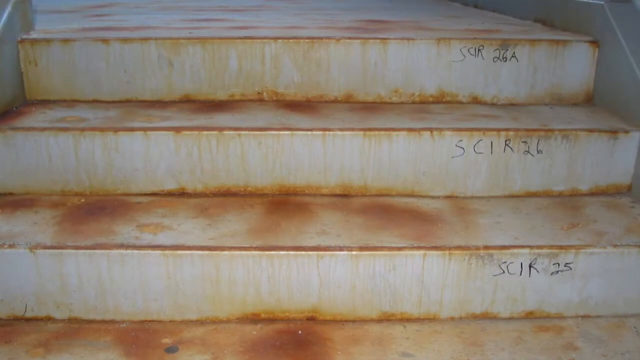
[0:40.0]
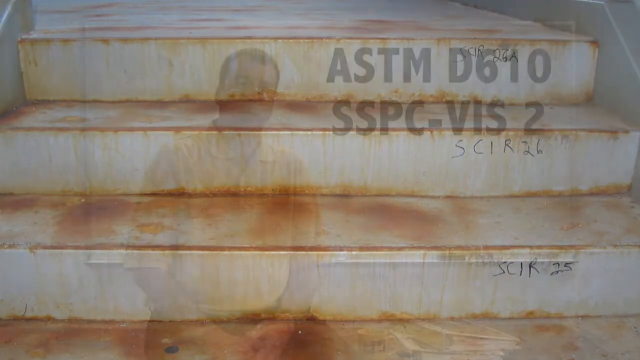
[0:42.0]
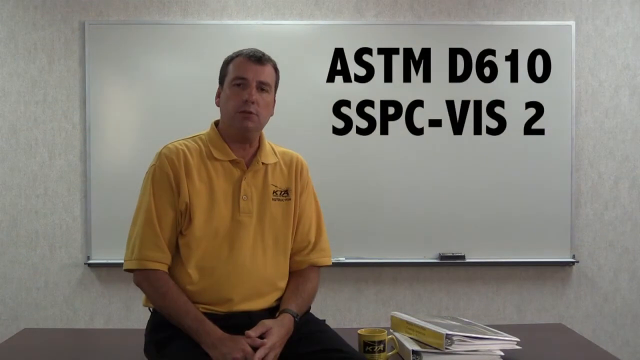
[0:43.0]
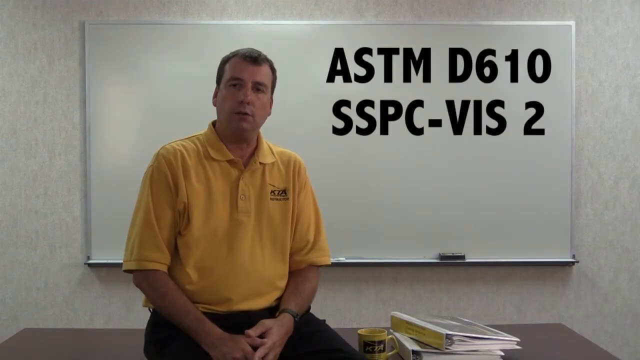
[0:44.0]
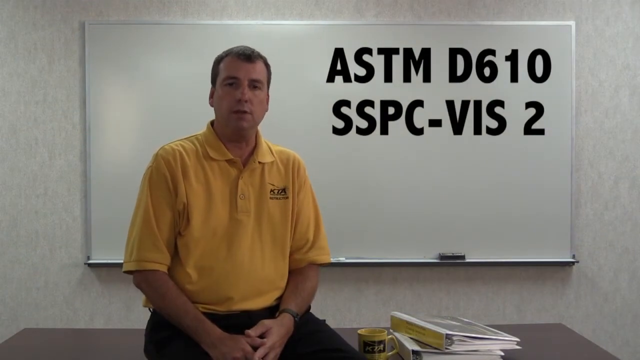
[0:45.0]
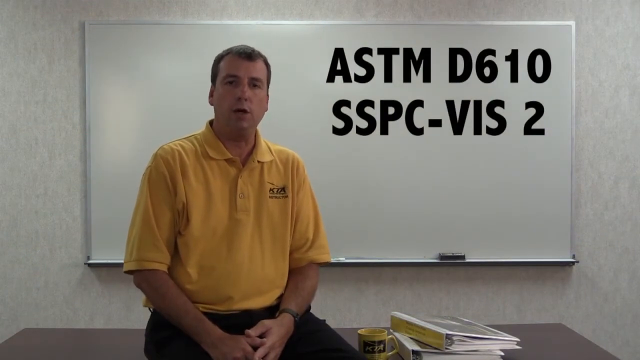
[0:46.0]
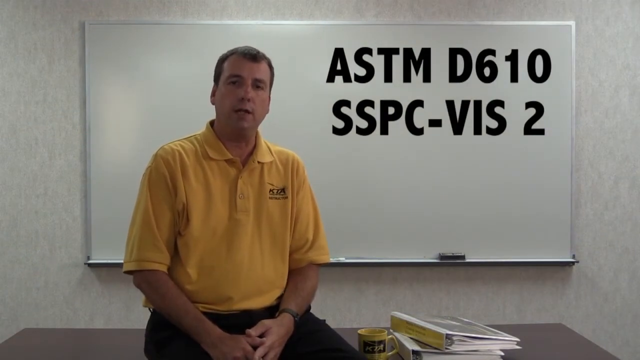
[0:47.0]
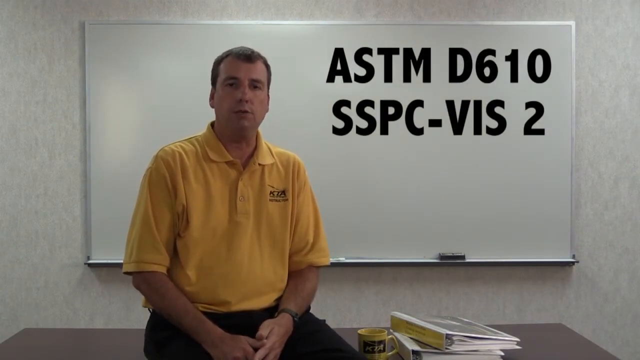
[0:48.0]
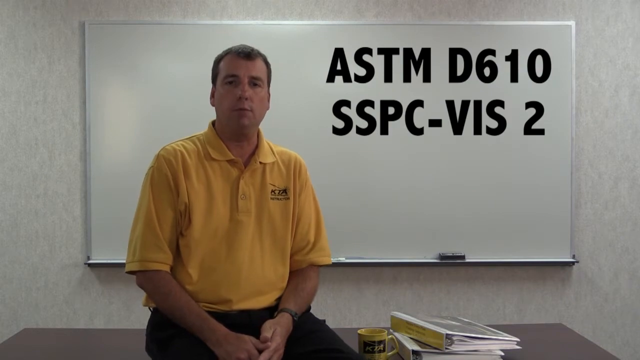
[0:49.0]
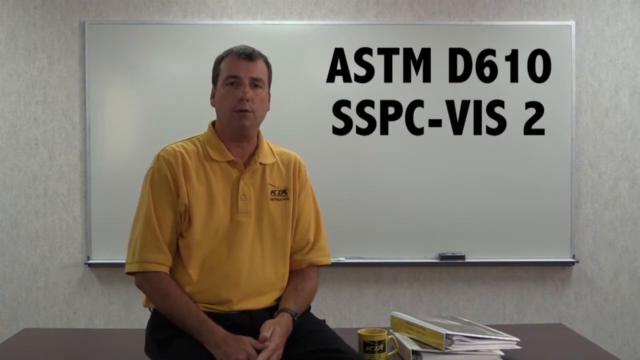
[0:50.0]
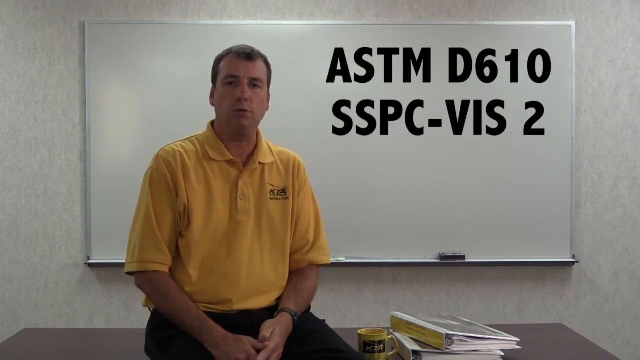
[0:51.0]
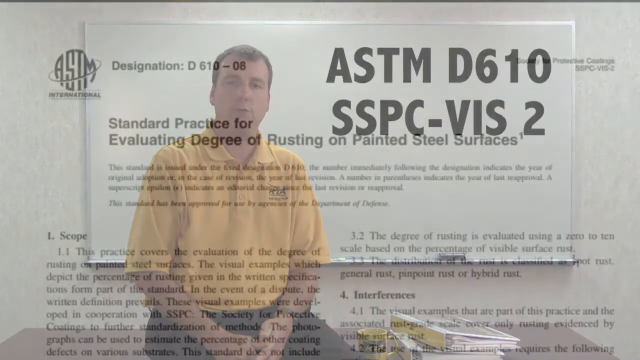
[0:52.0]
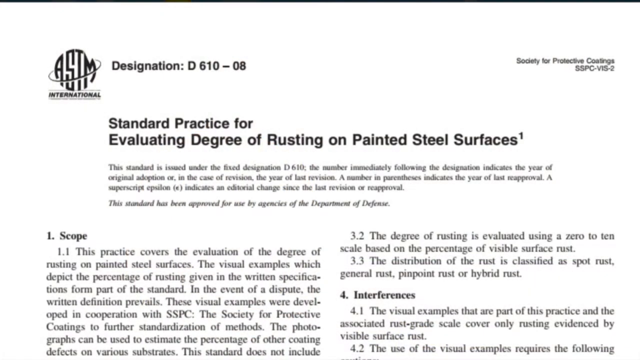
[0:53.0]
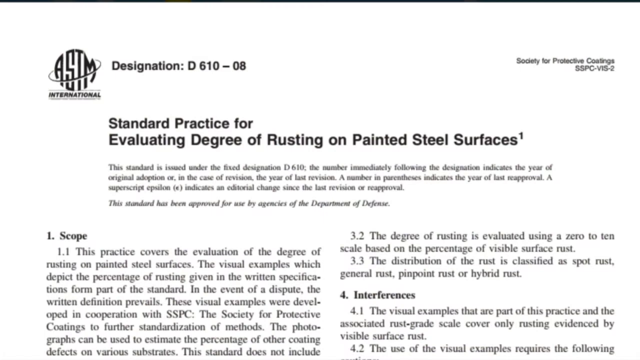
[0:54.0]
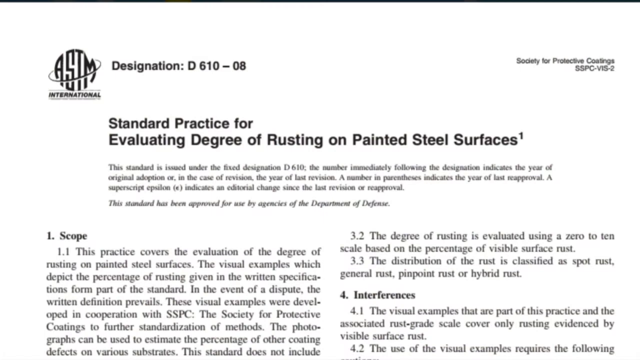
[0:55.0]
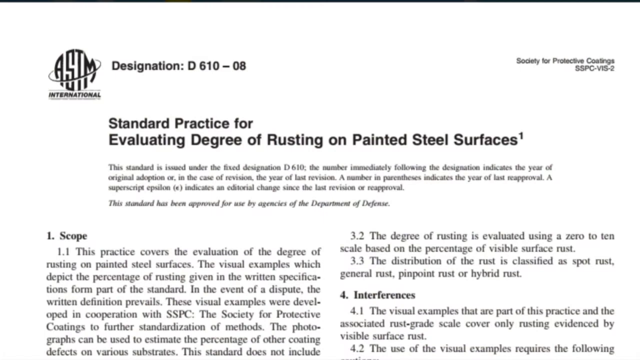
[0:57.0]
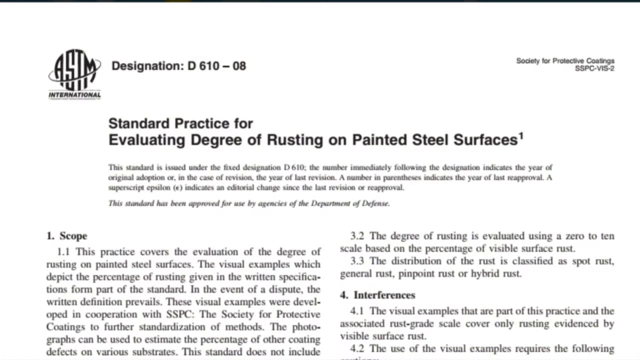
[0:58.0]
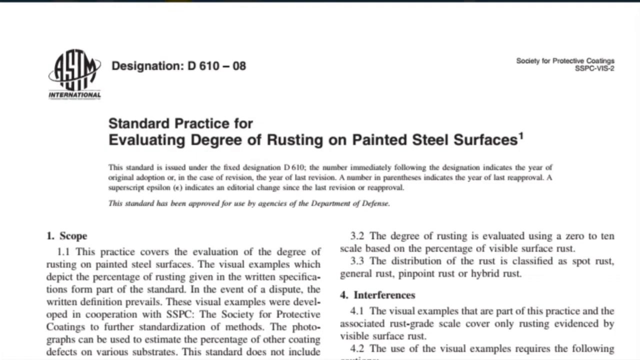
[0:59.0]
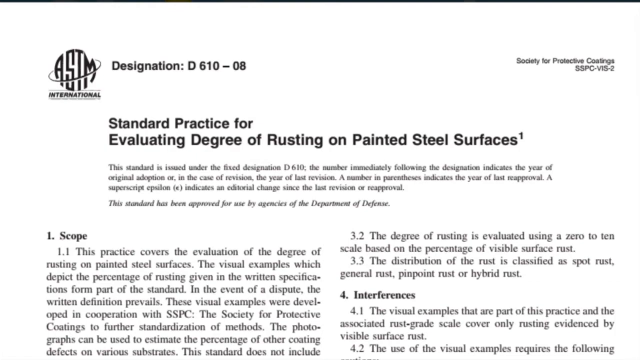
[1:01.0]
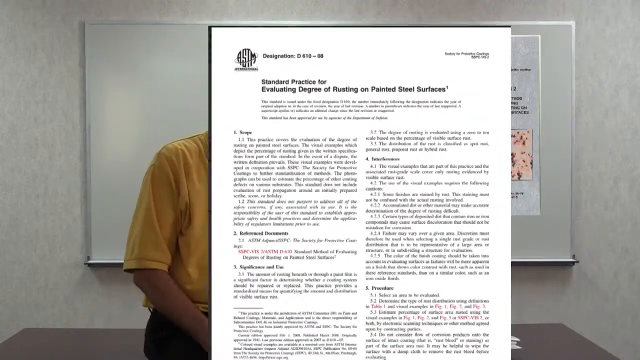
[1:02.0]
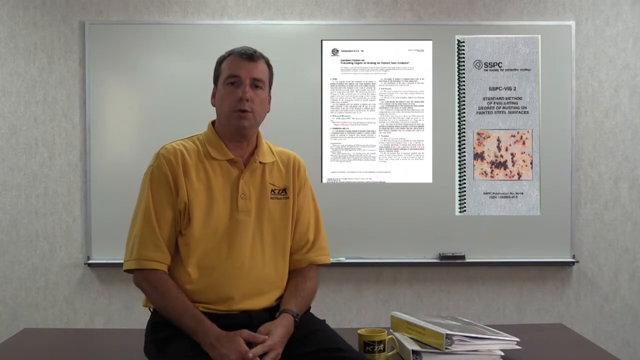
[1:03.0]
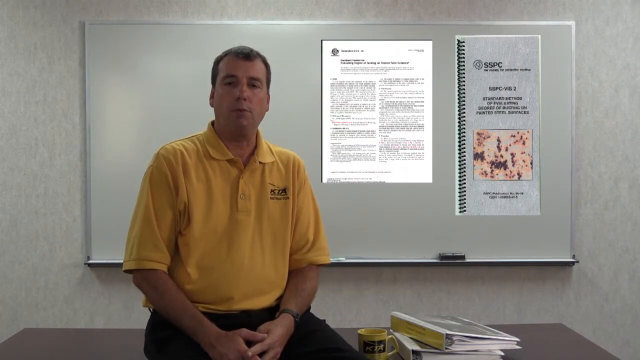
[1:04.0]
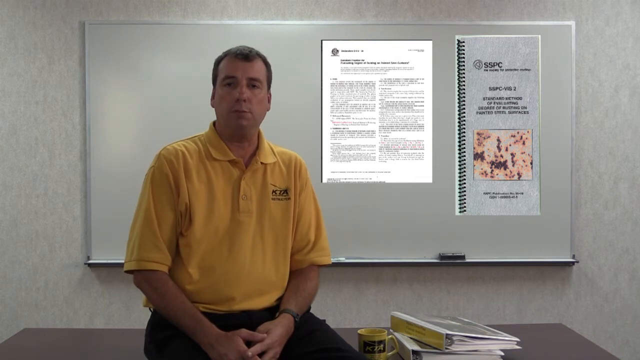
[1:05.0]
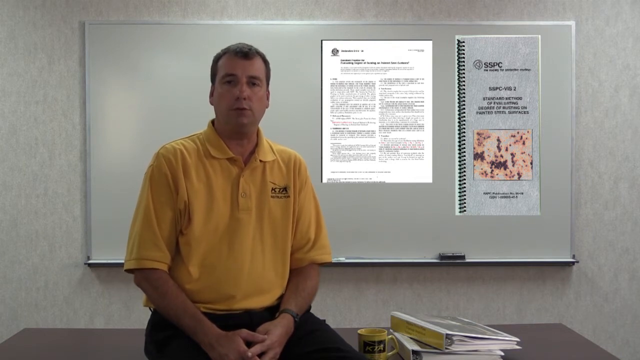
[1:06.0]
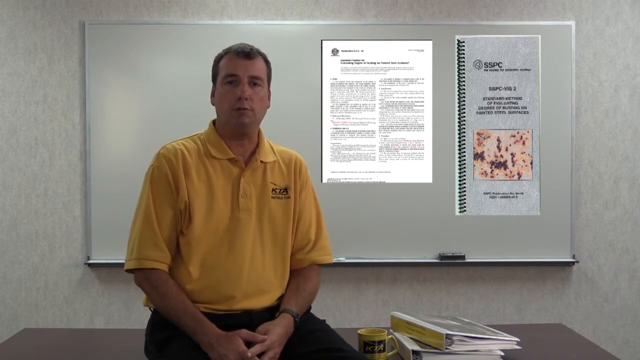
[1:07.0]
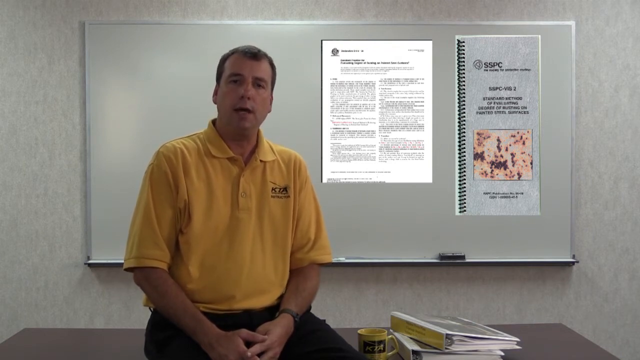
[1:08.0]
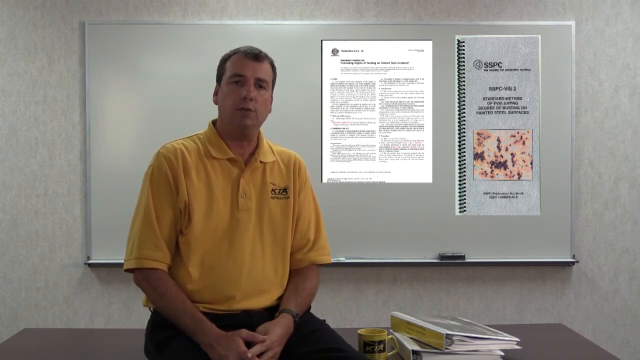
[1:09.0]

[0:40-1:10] Corroded steps are shown as the lecturer, wearing yellow, explains ASTM D610 and SSPC-BIS2. A book page reads "Standard practice for evaluating degree of rusting on painted steel surface" and includes a scope section; the degree of rusting is evaluated on a 0 to 10 scale based on the percentage of visible surface rust. The rusted metallic steps labeled SCR 26, SCI R26 and SCIR 25 are shown.